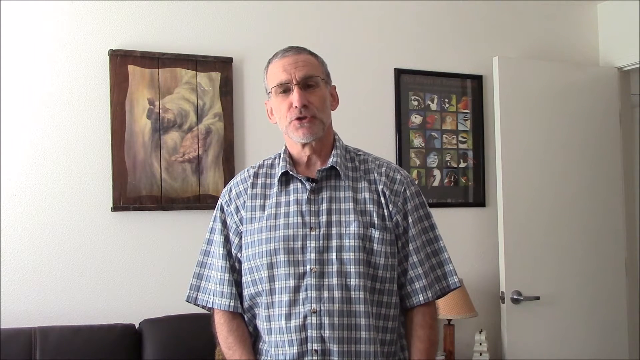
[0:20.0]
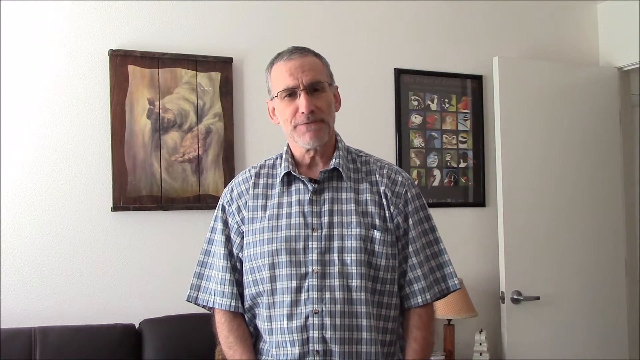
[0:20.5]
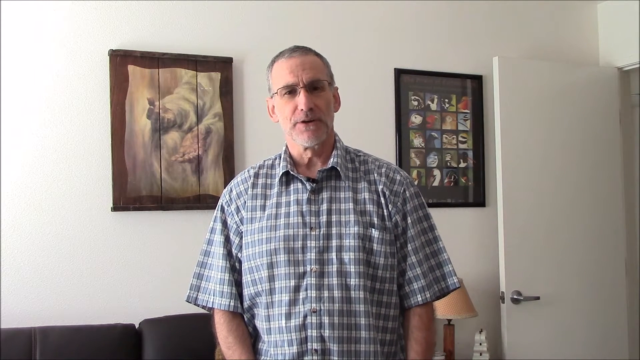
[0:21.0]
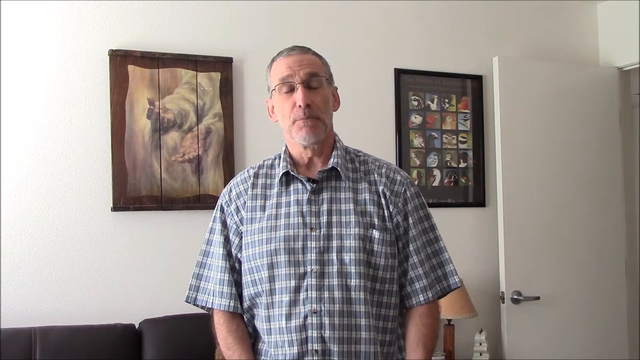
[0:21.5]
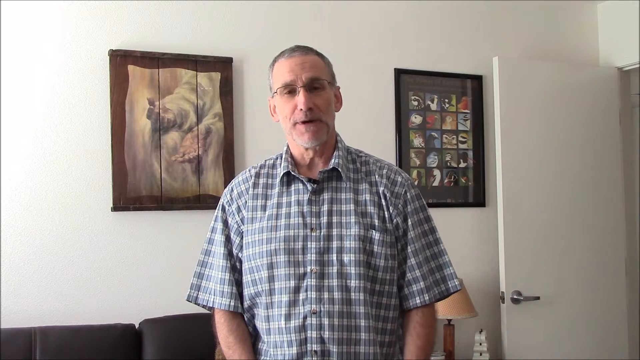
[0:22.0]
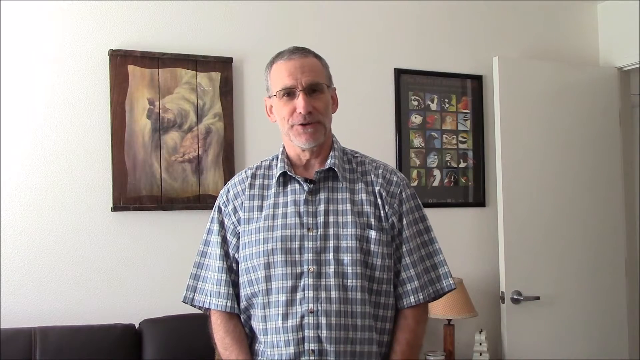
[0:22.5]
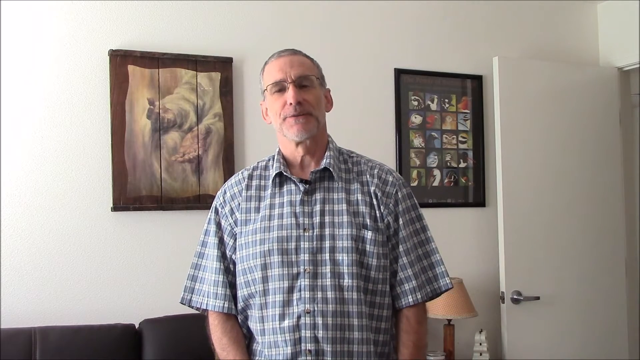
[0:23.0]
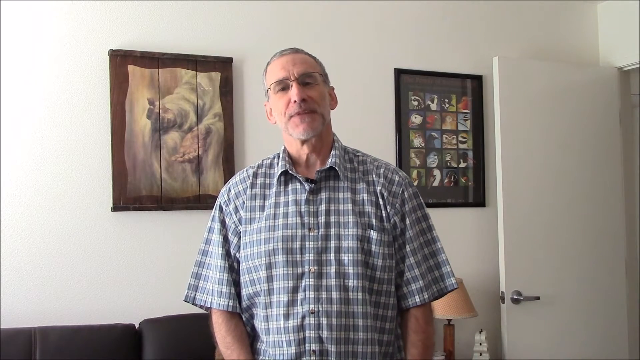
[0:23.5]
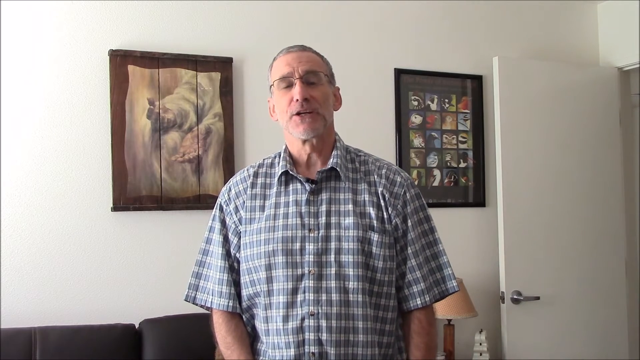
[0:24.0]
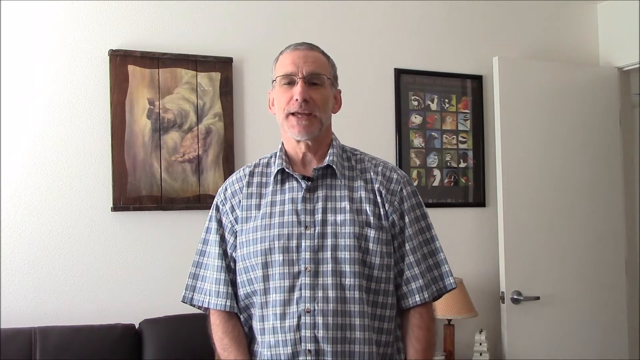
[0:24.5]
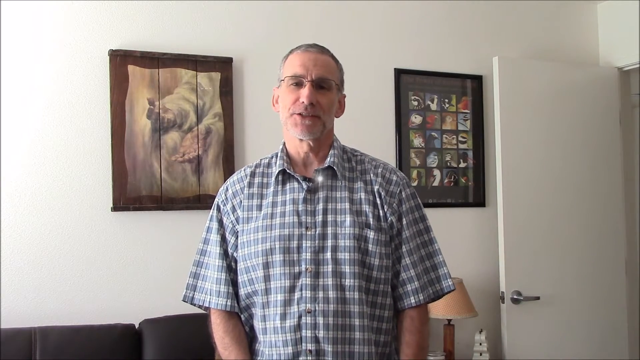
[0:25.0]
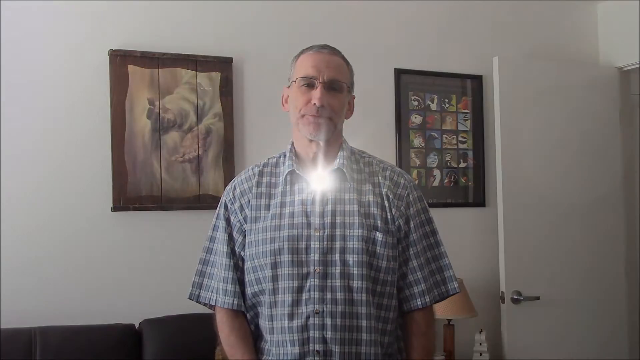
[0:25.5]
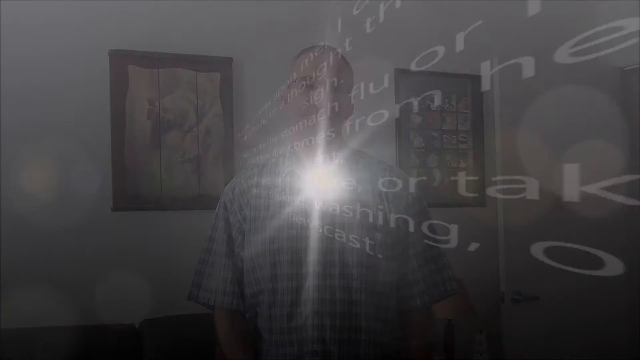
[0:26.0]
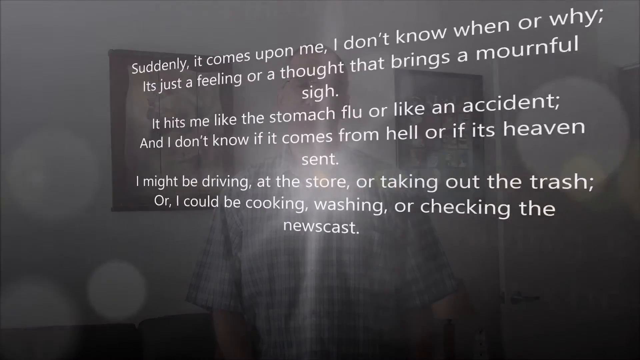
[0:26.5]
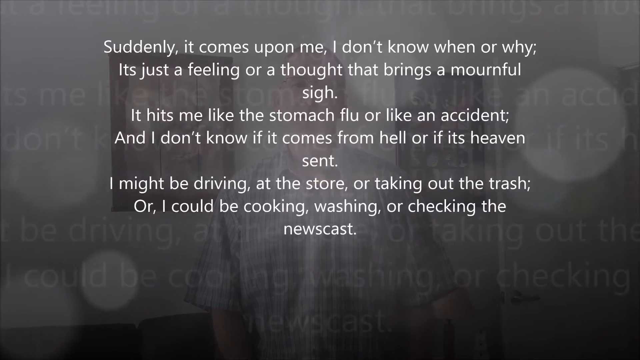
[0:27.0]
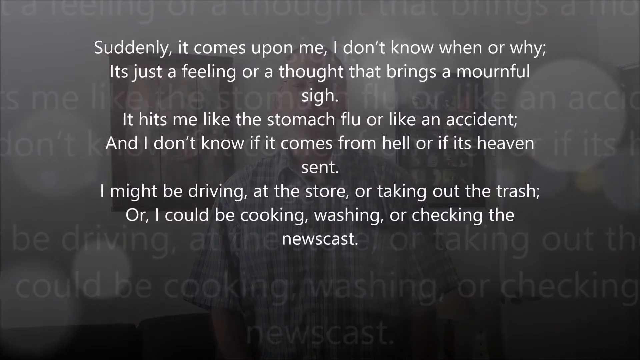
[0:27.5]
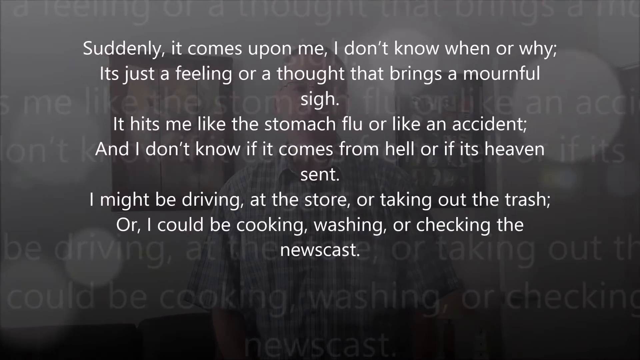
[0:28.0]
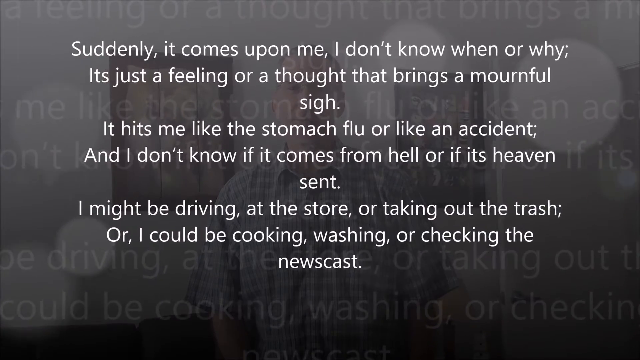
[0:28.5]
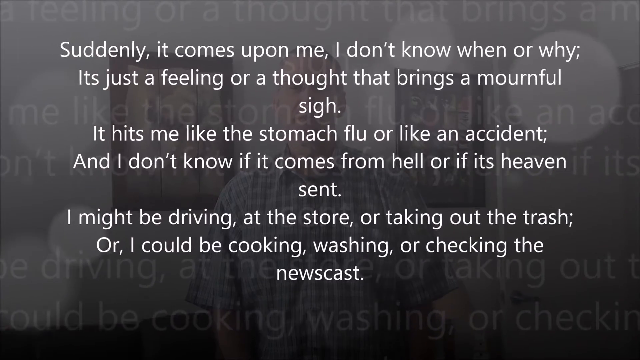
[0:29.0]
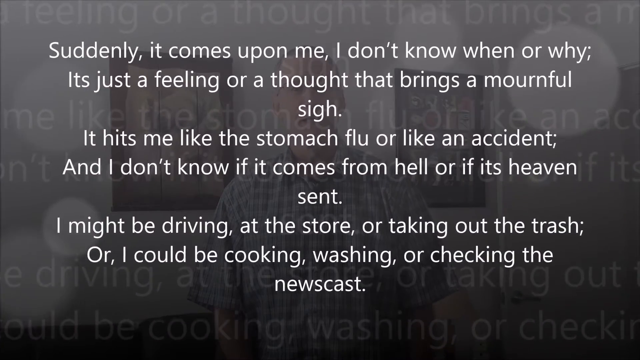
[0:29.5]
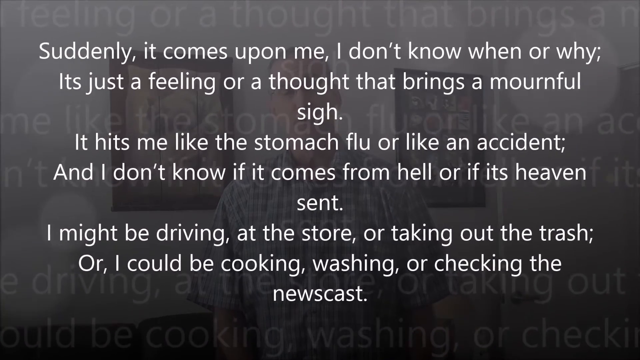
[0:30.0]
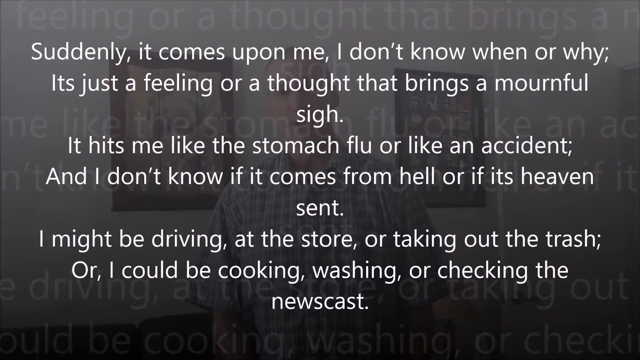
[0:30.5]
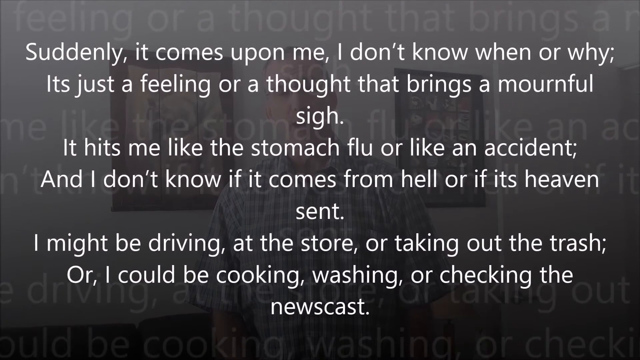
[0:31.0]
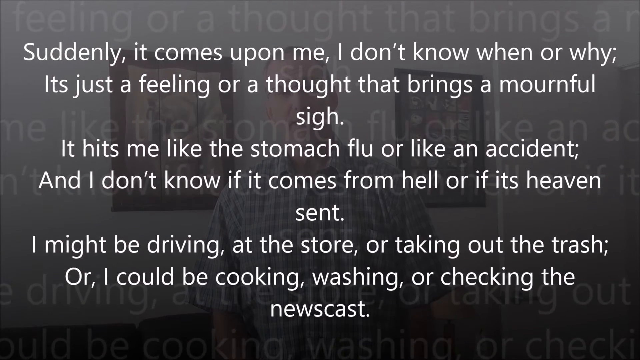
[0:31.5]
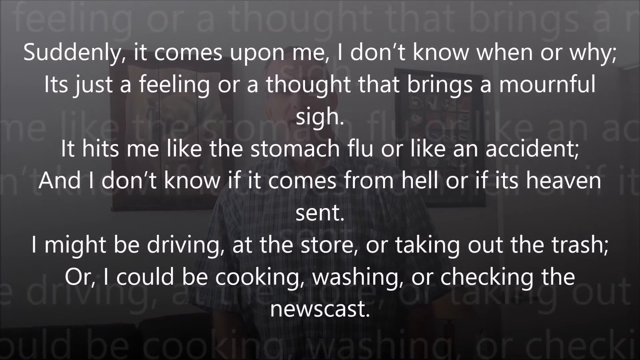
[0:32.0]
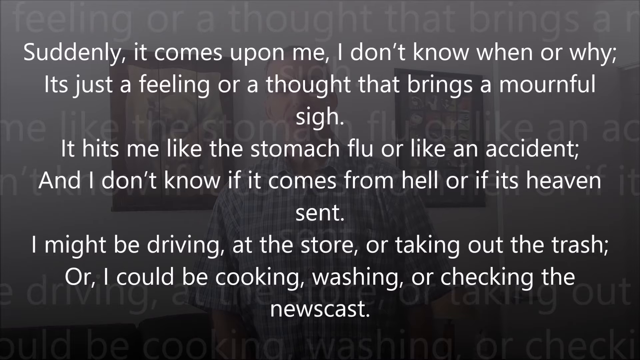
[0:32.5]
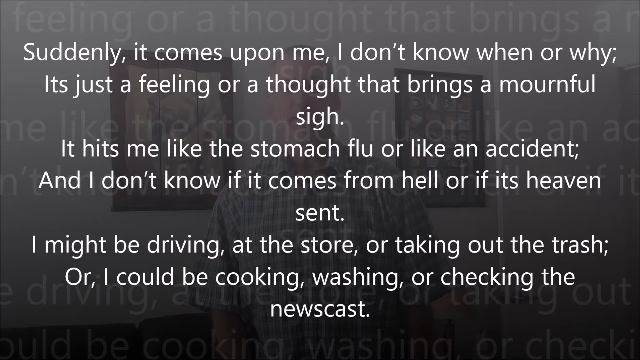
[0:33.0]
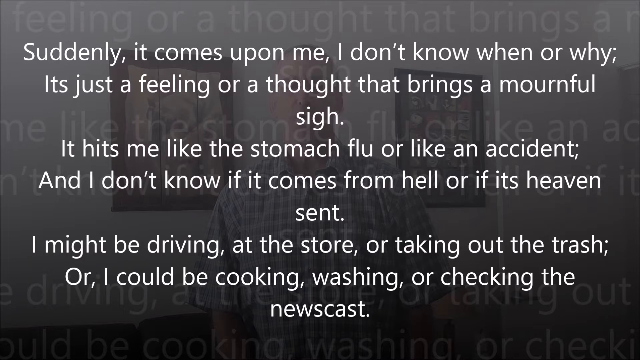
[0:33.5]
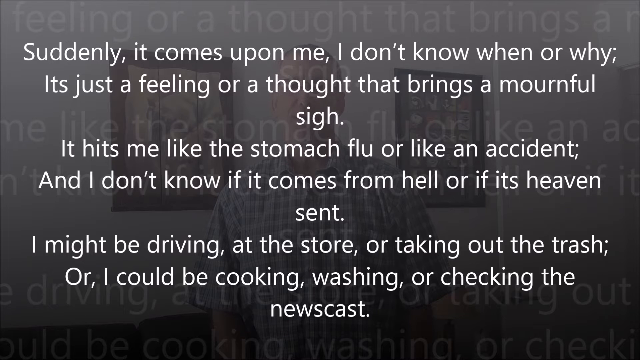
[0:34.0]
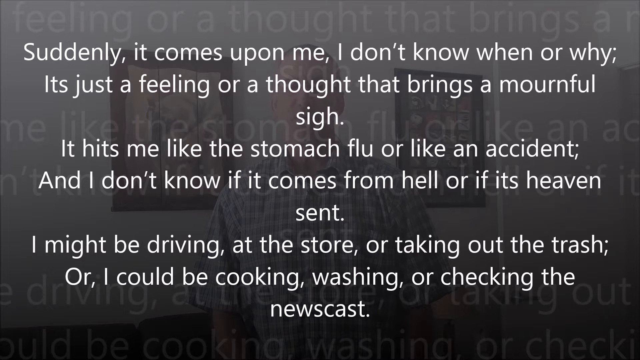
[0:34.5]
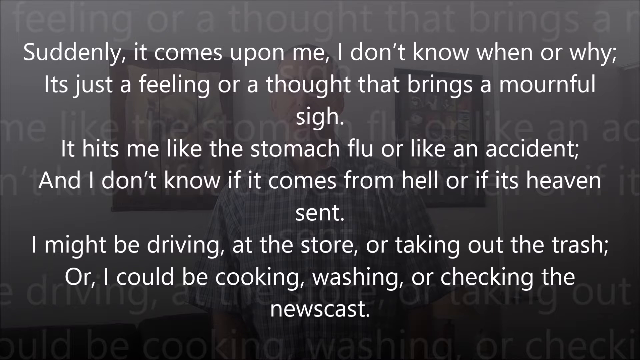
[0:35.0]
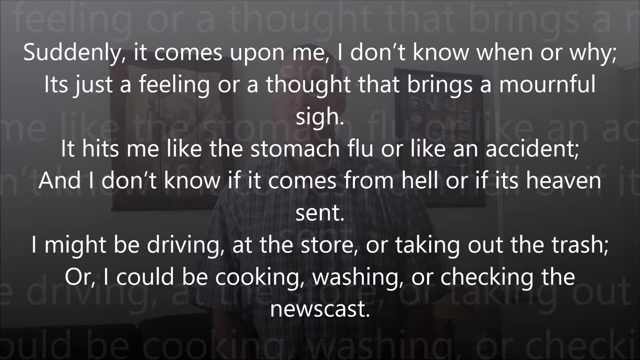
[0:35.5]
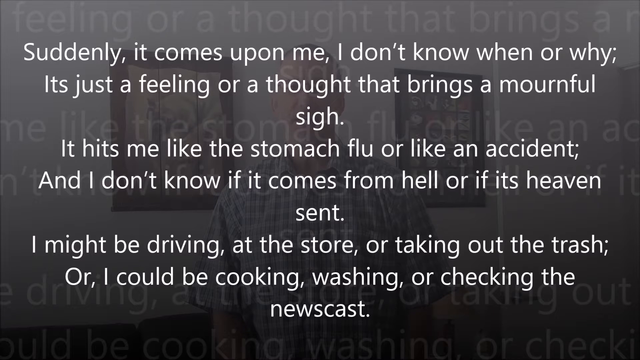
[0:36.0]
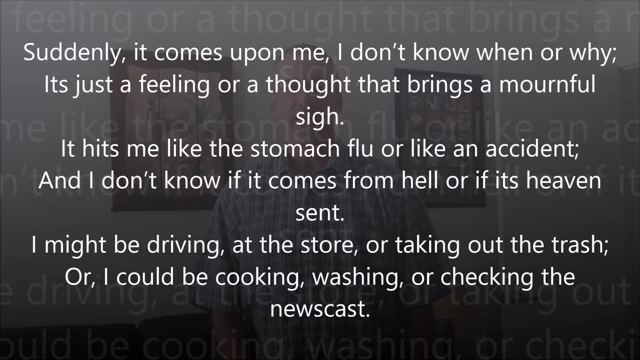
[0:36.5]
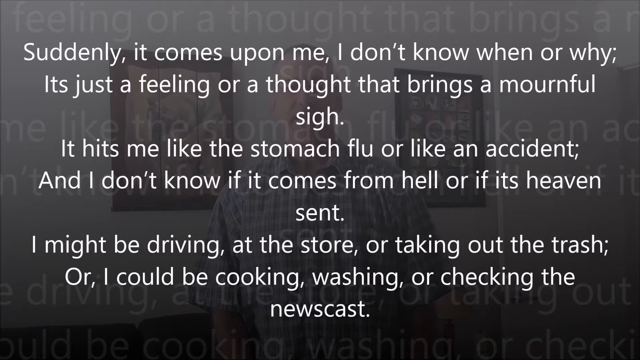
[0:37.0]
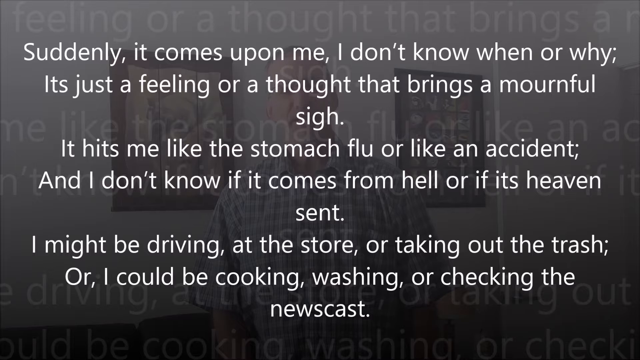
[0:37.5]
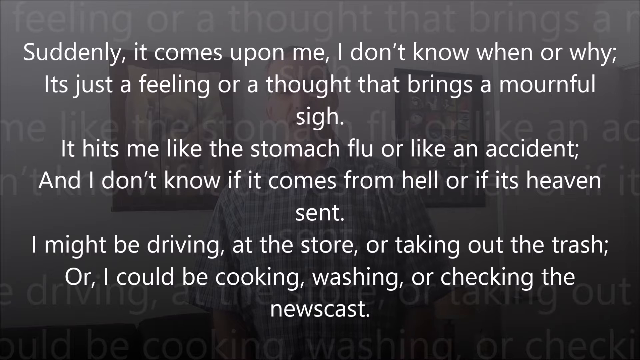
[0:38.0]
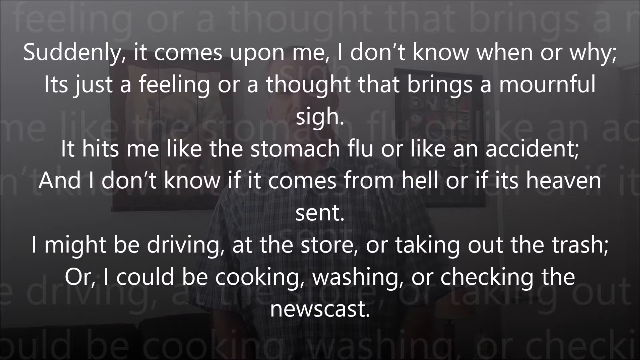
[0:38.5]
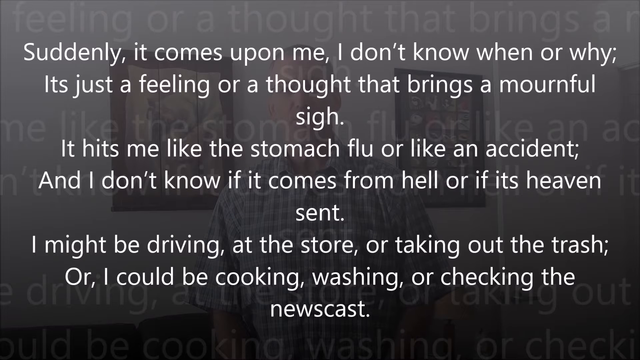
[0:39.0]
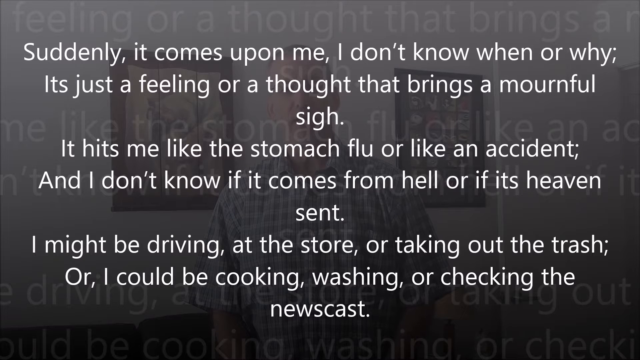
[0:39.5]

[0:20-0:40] The same elderly man talks to the camera. A bright light appears in the center of the video and the screen transforms into a set of white text that looks like it may be a poem, with larger opaque text of the same poem behind the main text. The text reads, "Suddenly, it comes upon me, I don't know when or why; It's just a feeling or a thought that brings a mournful sigh. It hits me like the stomach flu or like an accident. And I don't know if it comes from hell or if it's heaven sent. I might be driving, at the store, or taking out the trash; Or, I could be cooking, washing, or checking the newscast." The text zooms in a bit until it pauses near the end, and then the man appears again.